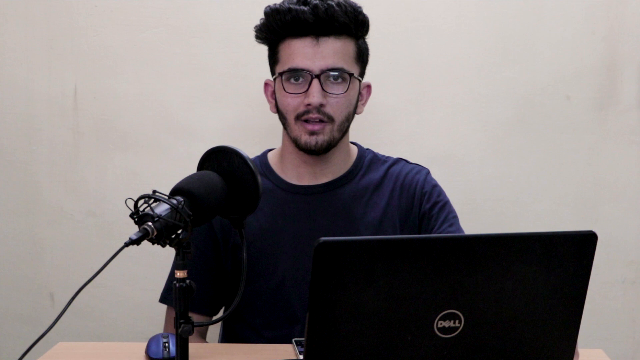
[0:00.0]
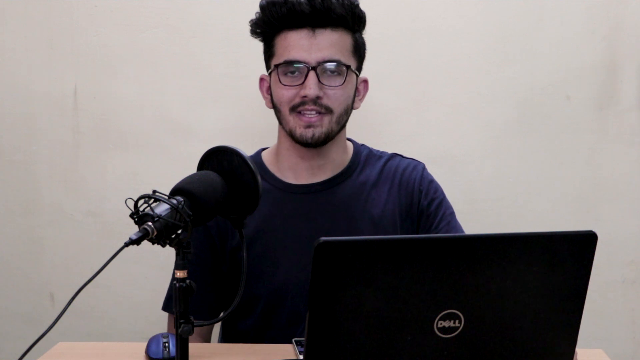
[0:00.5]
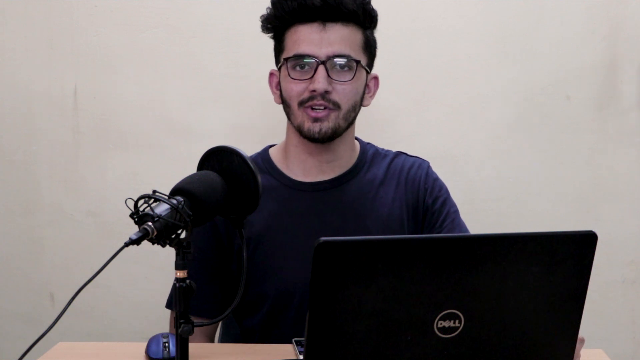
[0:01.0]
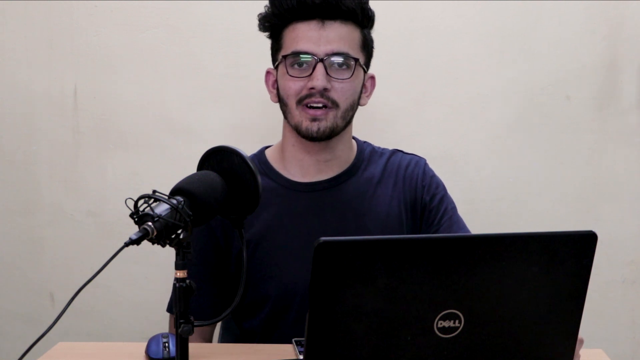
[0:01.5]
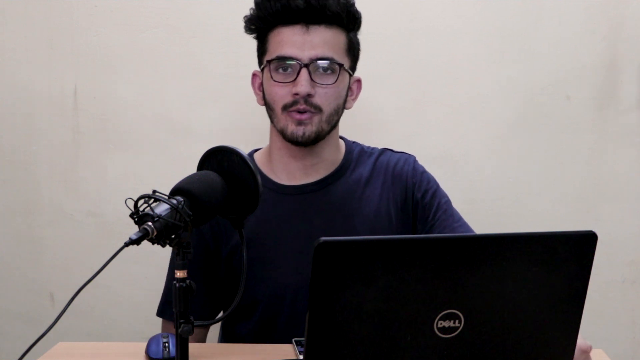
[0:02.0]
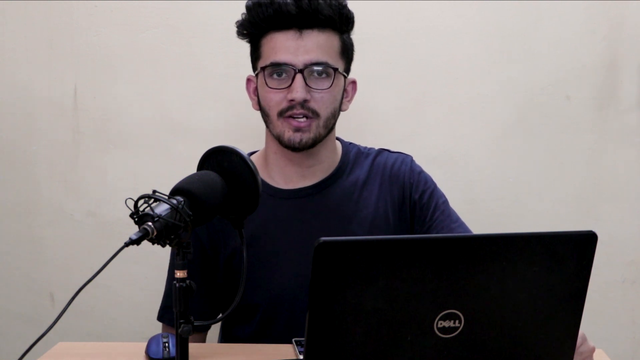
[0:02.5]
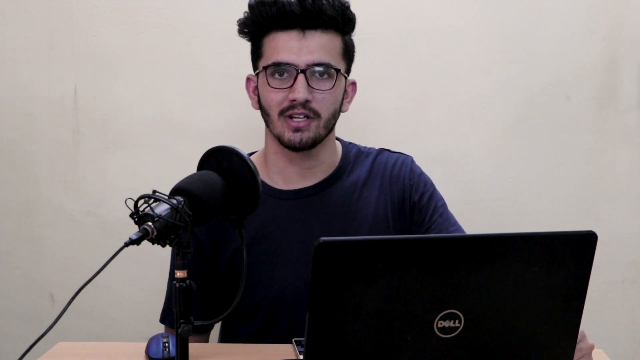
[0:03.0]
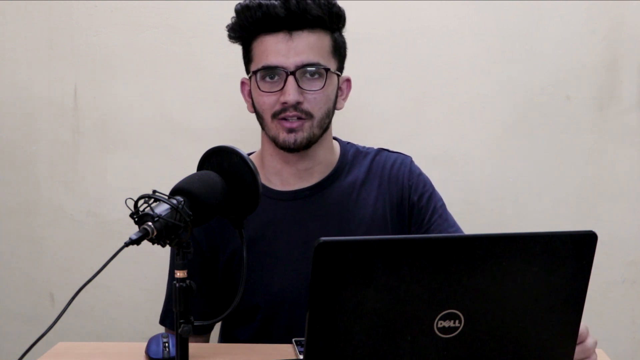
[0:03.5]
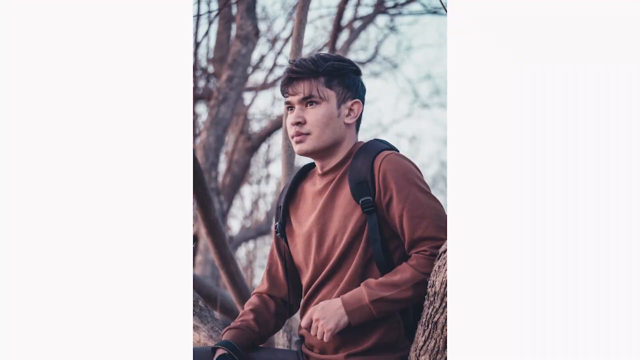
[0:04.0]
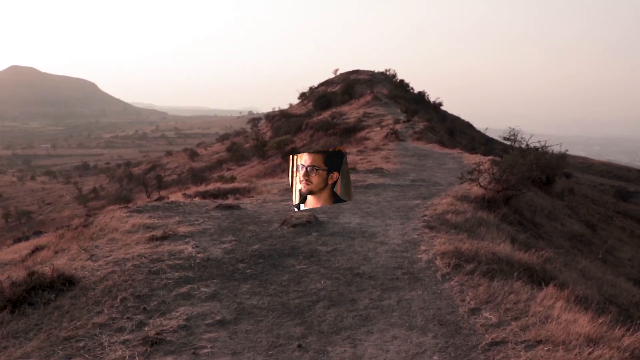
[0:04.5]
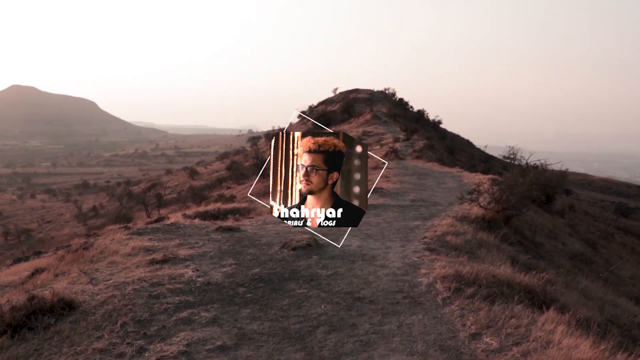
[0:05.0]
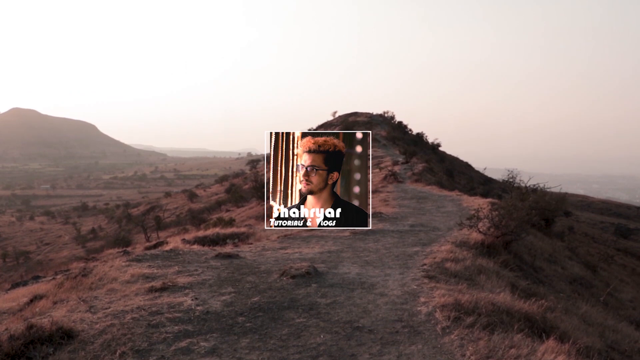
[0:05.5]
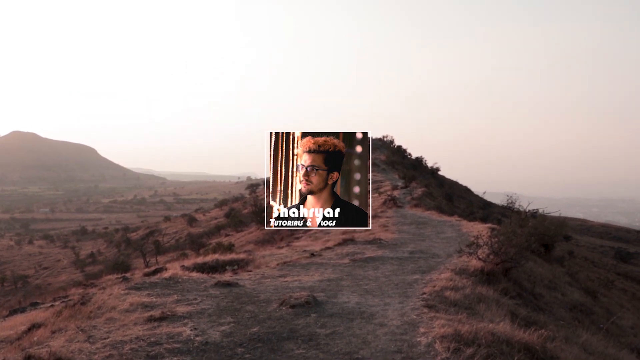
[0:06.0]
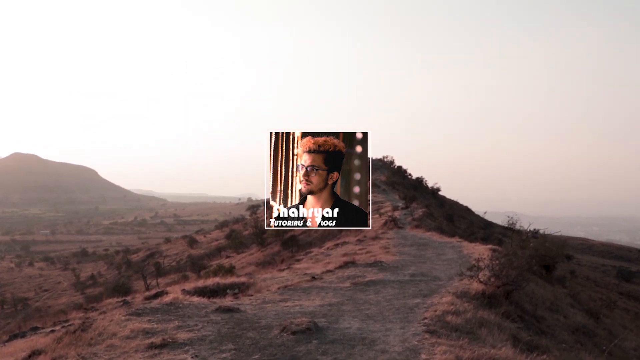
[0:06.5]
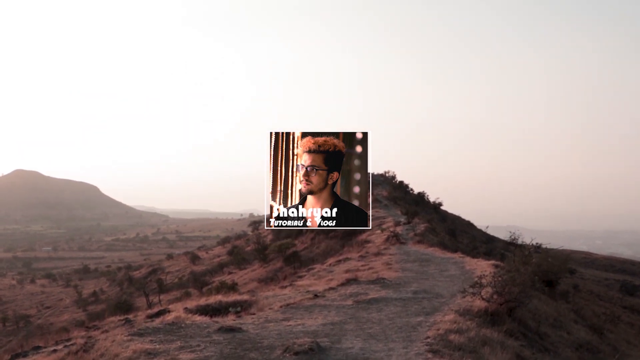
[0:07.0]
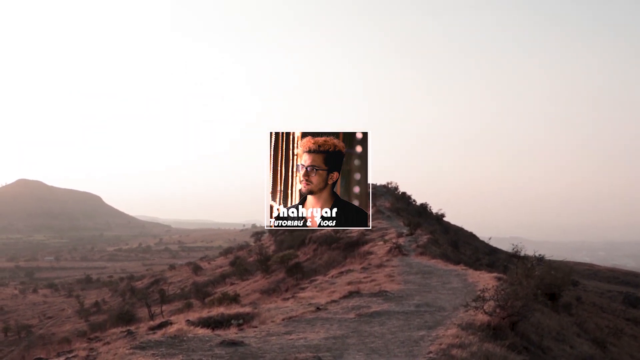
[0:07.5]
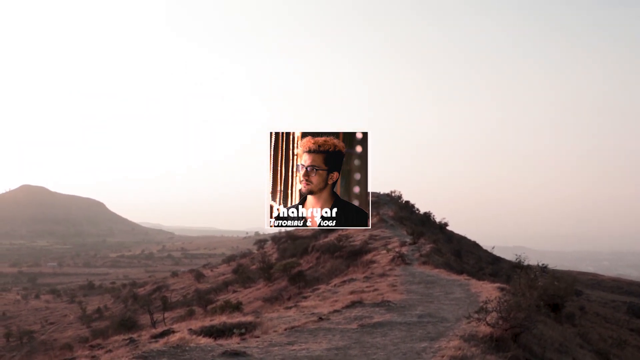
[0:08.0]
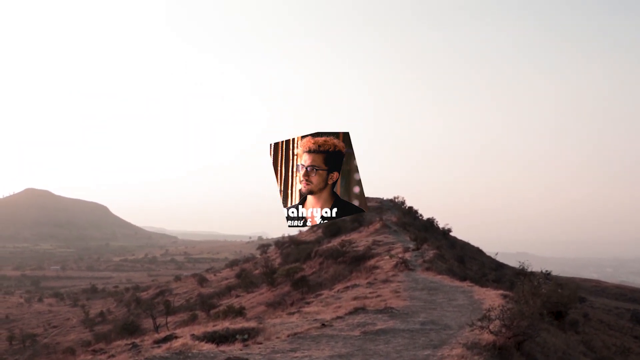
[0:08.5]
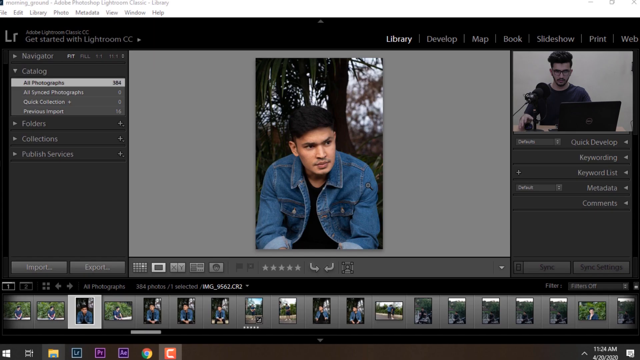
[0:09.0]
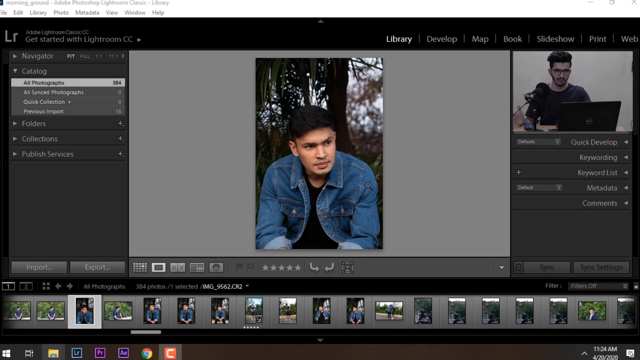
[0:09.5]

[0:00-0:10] A man sits in front of a laptop and a professional microphone, seemingly perhaps creating a podcast. He is in front of a plain white background, wearing a blue shirt and glasses, and speaks to the camera. The video then cuts to a panning shot of an image of what looks like a desert, and an animation with a photo of the man appears in the middle of the screen along with some text that cannot be made out, then animates away and disappears. It then cuts to a screen of what looks like possibly photos or photo editing software.